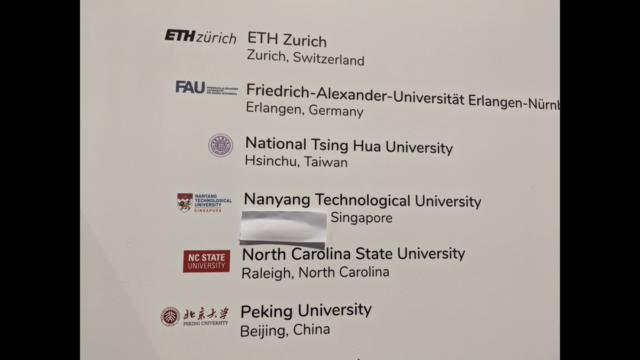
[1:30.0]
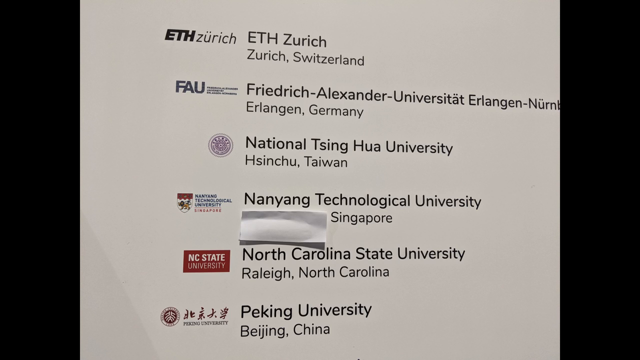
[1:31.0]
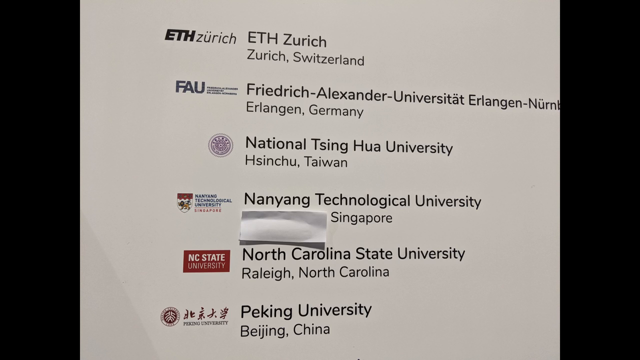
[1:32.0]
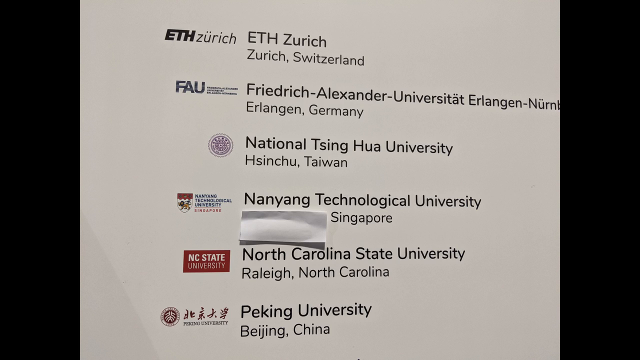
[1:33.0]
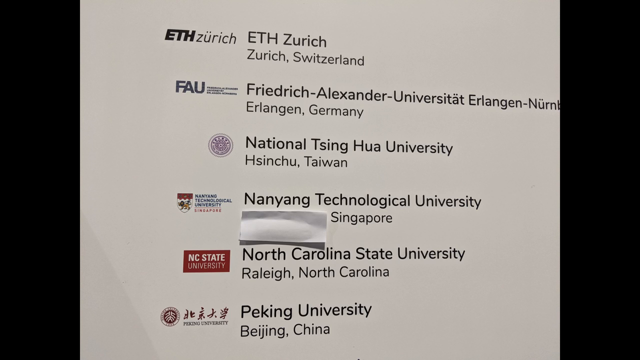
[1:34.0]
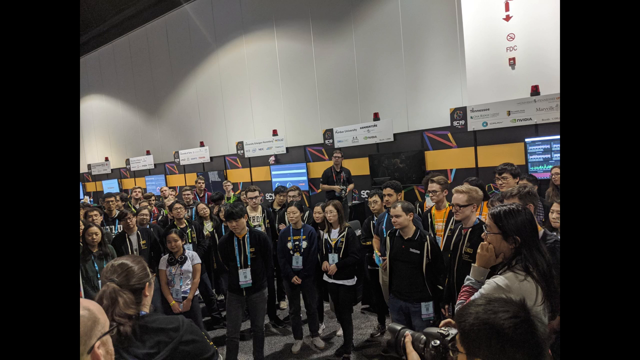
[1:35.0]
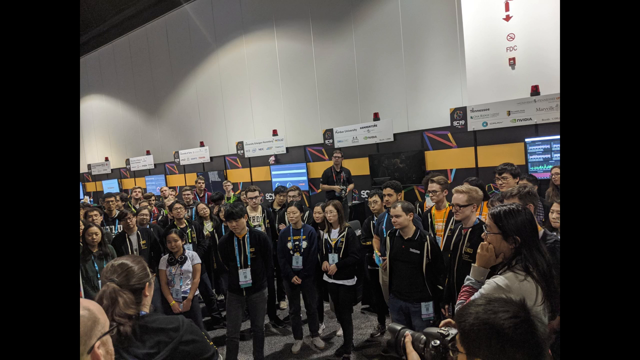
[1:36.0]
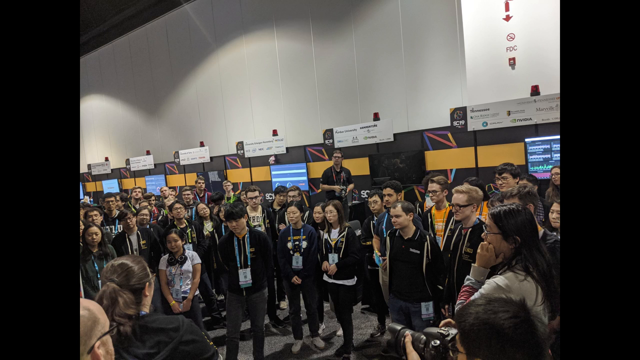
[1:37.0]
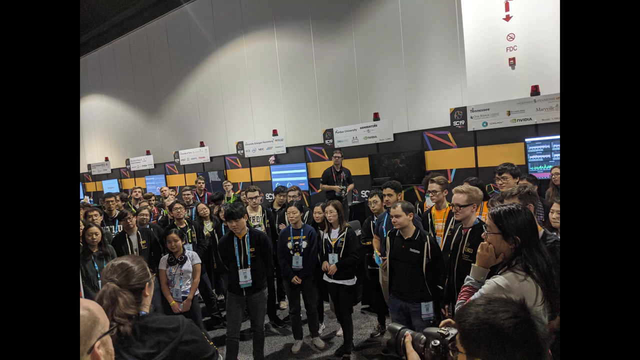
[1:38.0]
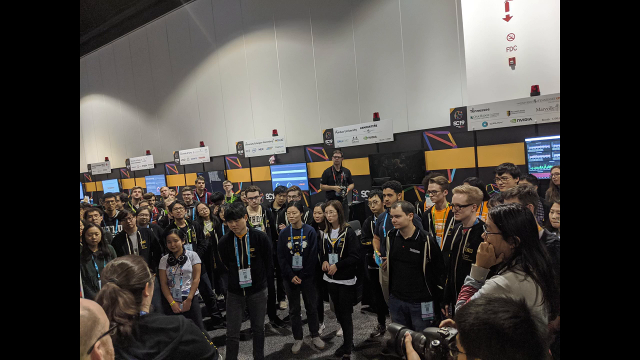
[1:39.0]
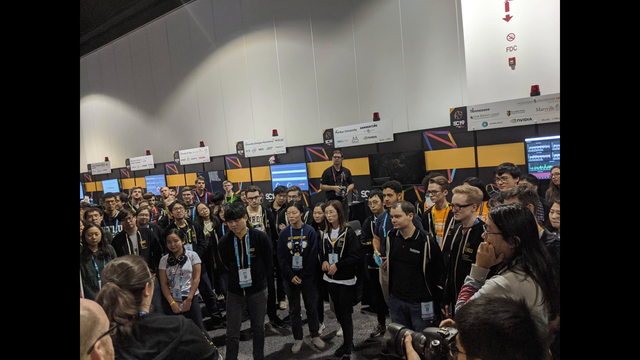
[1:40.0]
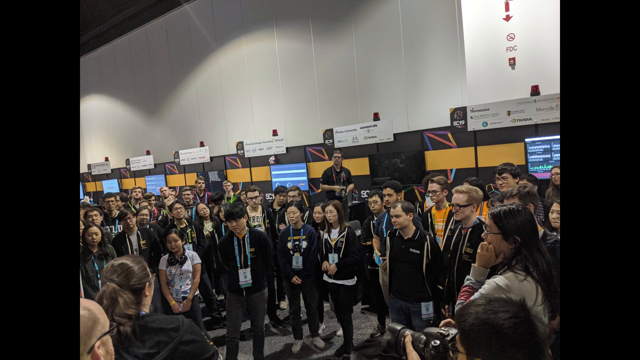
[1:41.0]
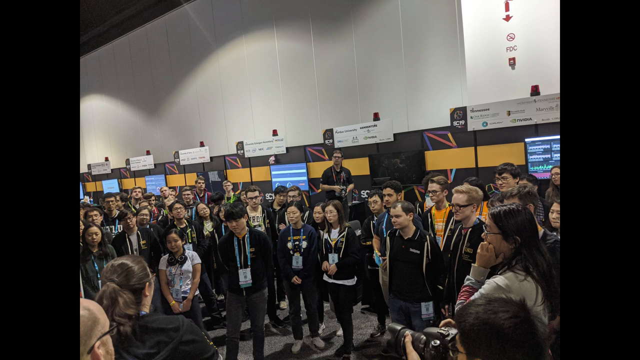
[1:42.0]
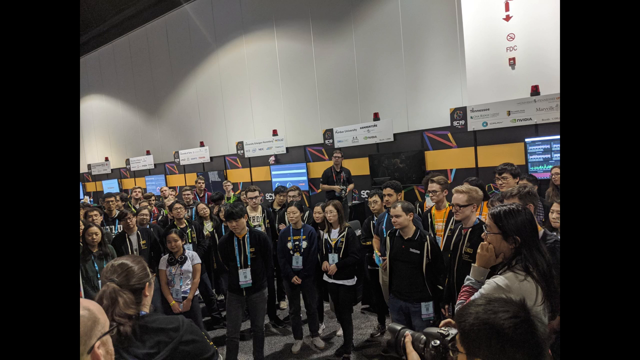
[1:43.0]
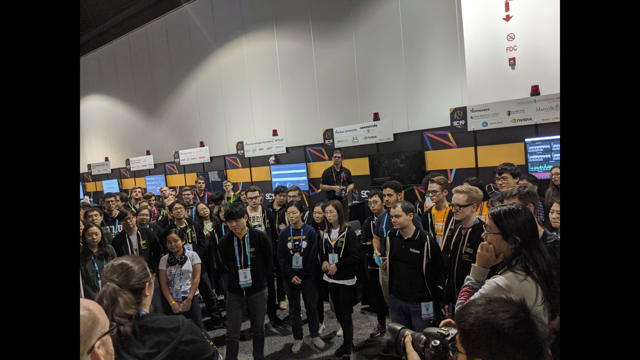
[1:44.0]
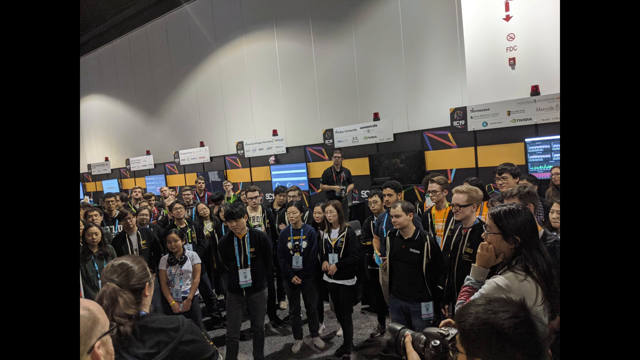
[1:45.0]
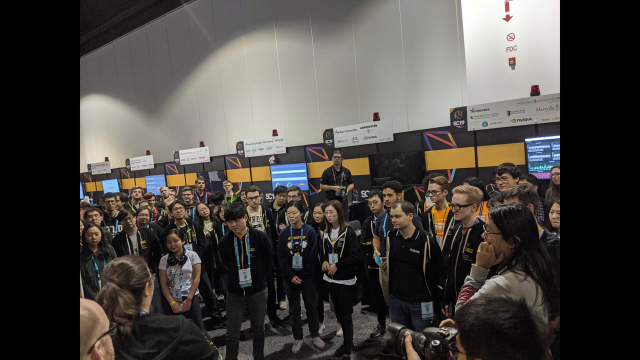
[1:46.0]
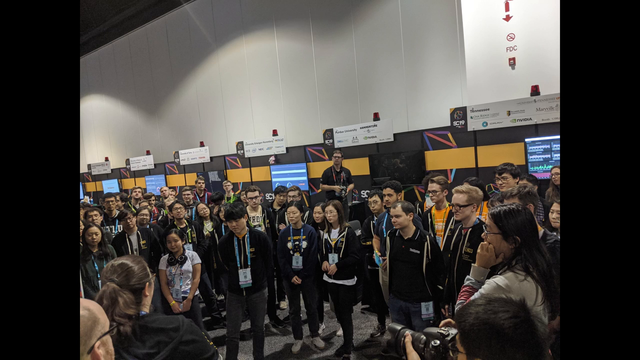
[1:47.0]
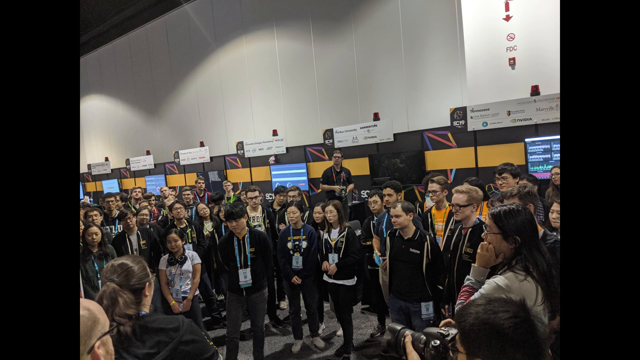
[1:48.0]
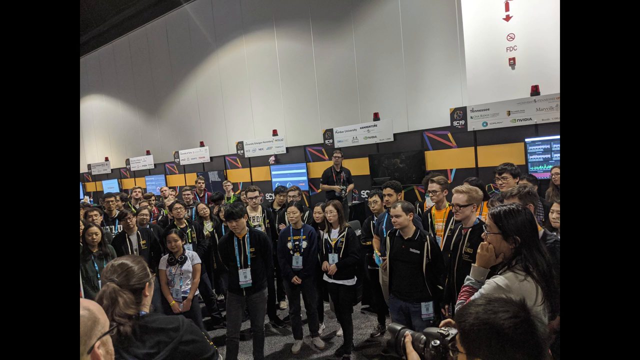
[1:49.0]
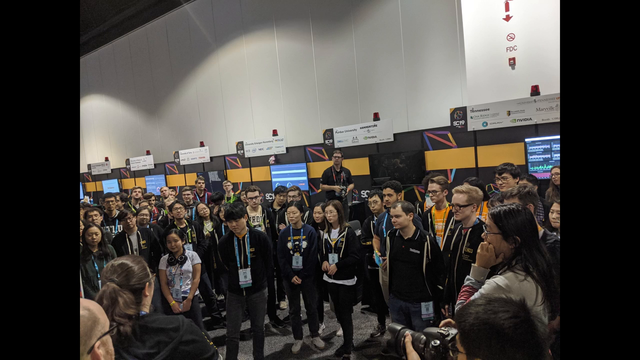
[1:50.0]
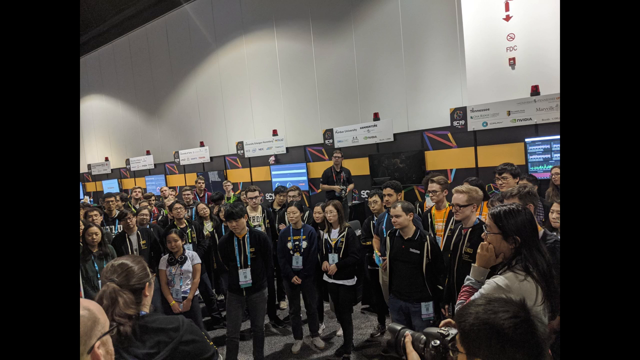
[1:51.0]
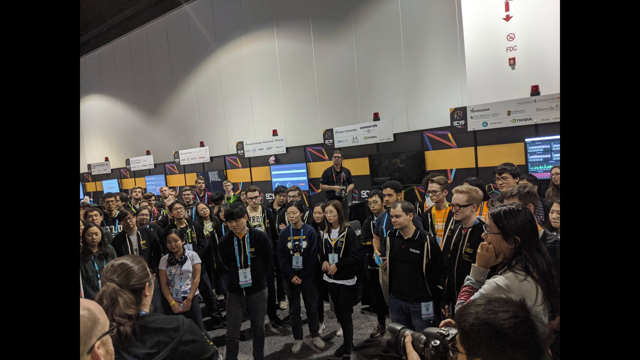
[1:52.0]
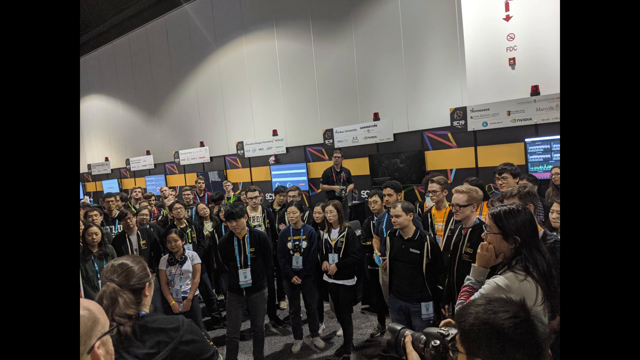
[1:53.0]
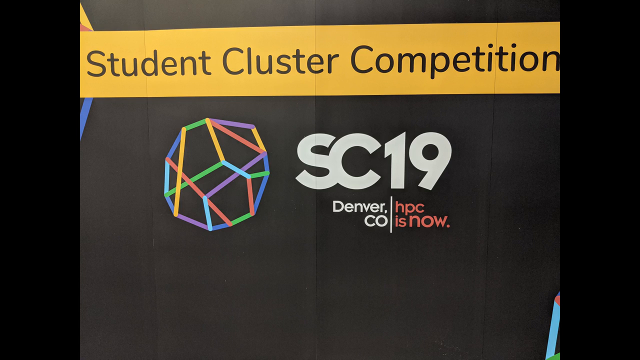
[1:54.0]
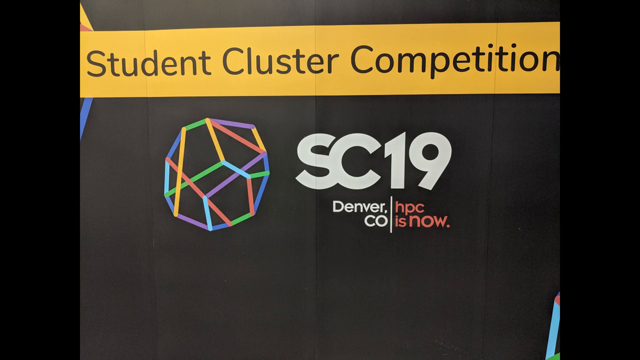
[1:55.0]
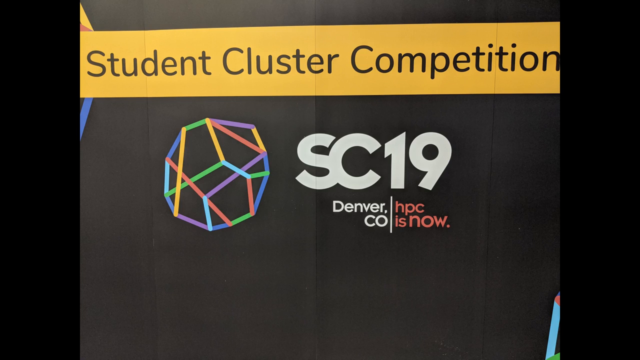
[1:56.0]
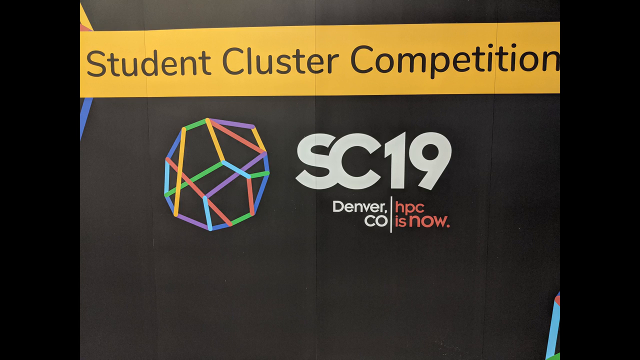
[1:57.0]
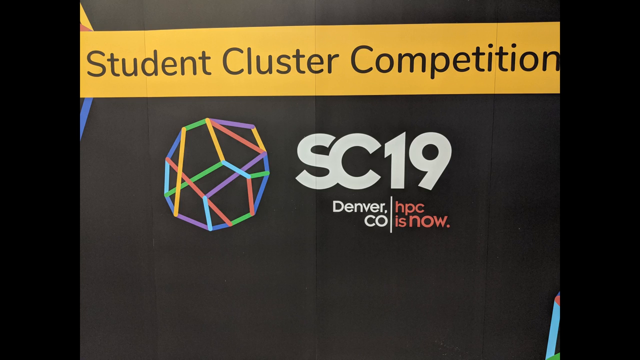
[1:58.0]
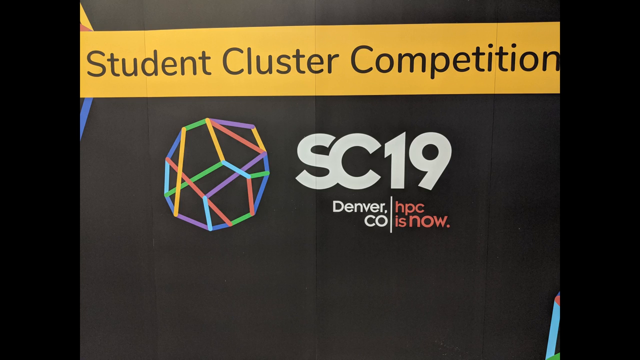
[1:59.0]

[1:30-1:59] A white page lists different universities in a vertical row, with each school's logo on the left and its name and location information on the right. All of the schools' locations are visible except Singapore's, which is covered by a single white rectangular piece of paper. The video then transitions to a wide view of several students standing in a large group area, with white walls and black panels with yellow stripes in the background. A cameraman is in the background in the center of the scene with the students. The students all wear white name tags around their necks on blue straps. The next scene cuts to a black panel with a colorful orb-like logo on the left and the text "SC19" next to it.